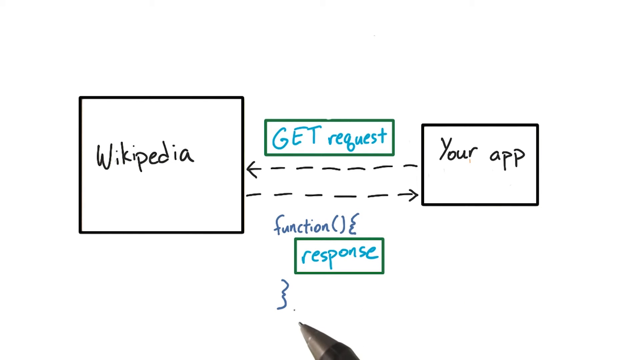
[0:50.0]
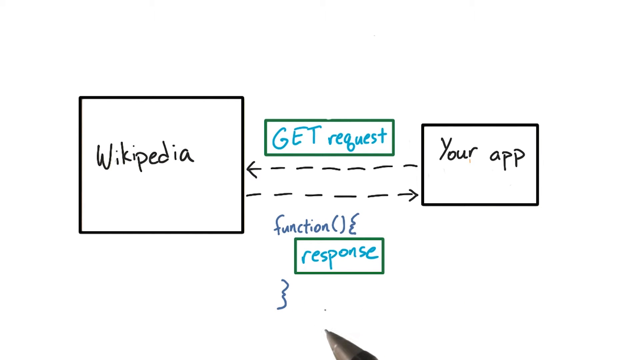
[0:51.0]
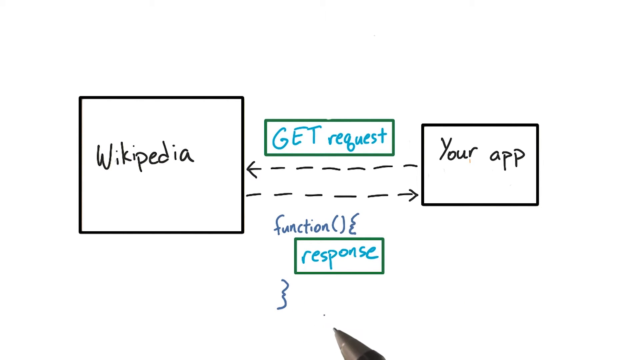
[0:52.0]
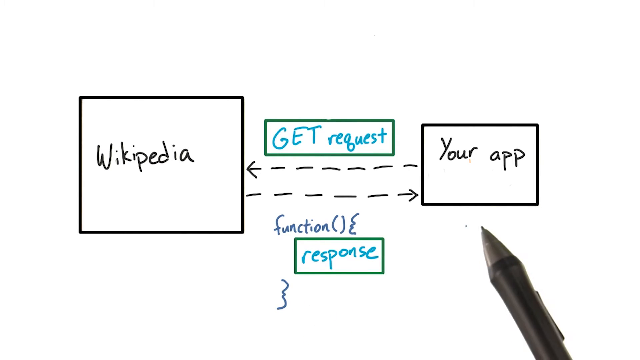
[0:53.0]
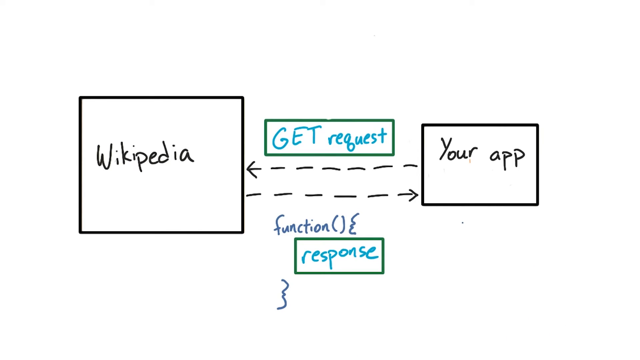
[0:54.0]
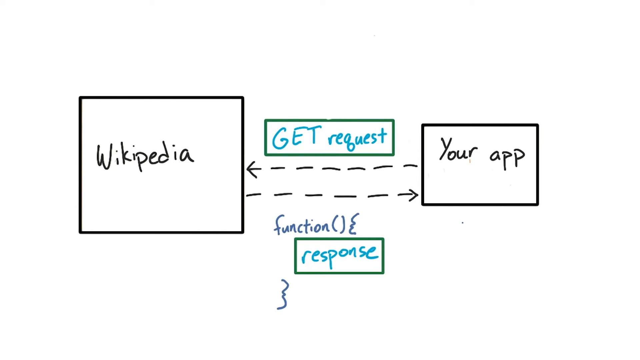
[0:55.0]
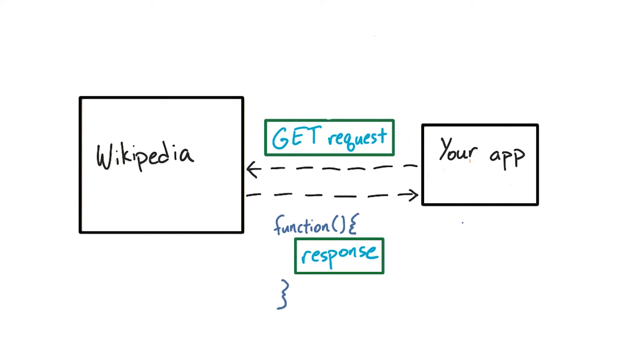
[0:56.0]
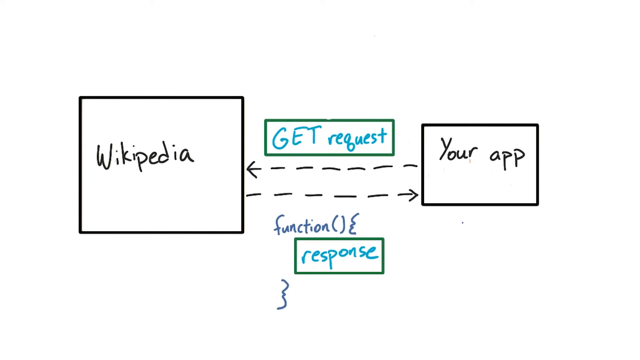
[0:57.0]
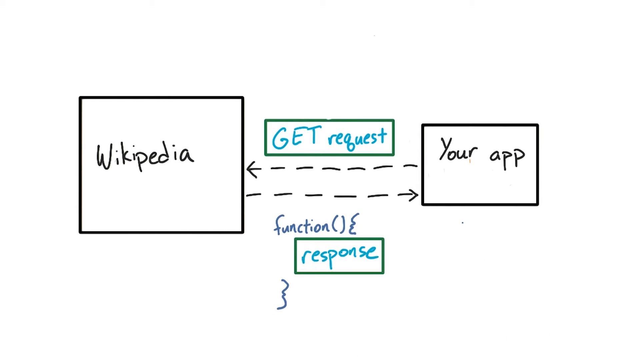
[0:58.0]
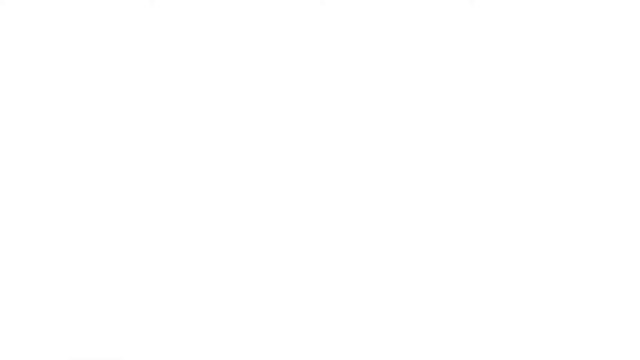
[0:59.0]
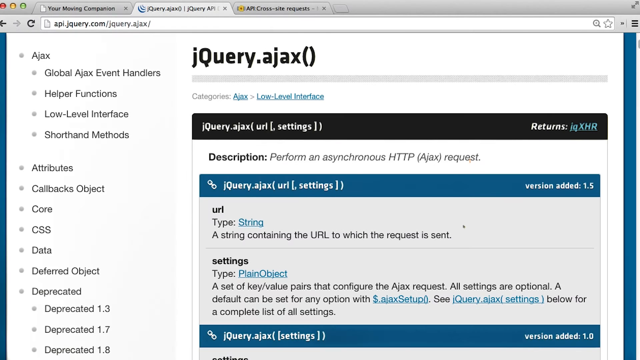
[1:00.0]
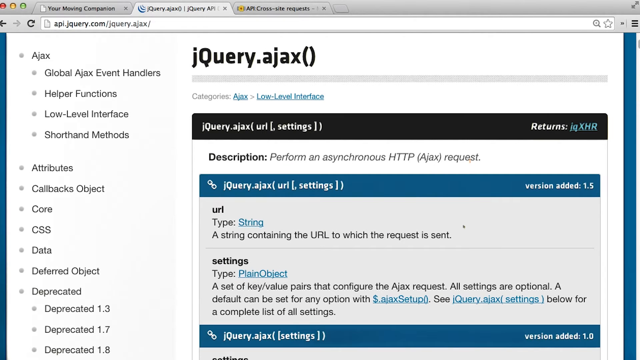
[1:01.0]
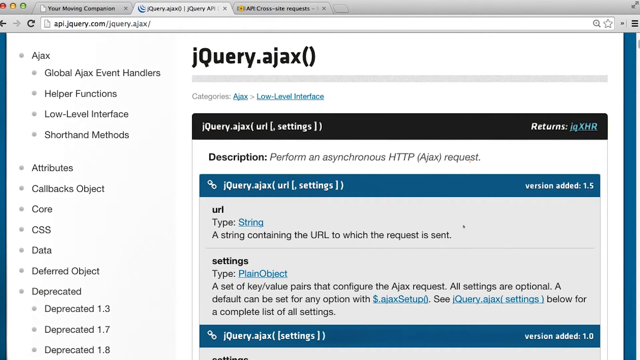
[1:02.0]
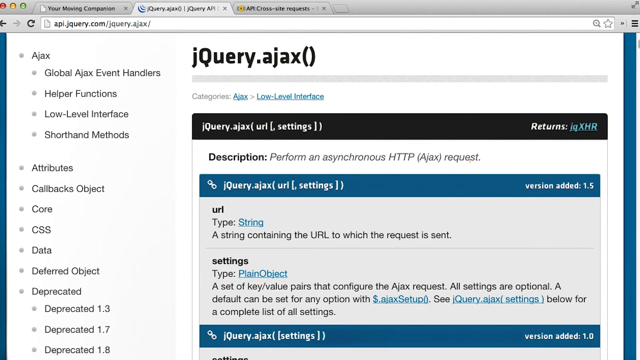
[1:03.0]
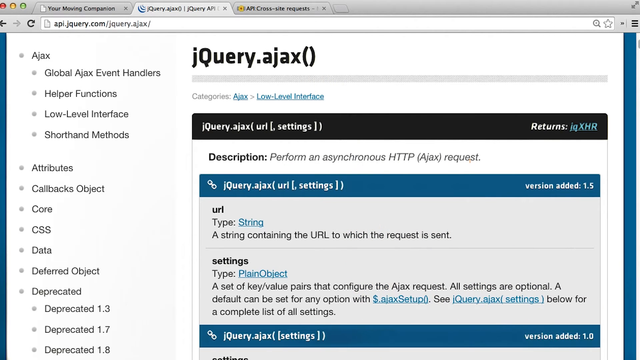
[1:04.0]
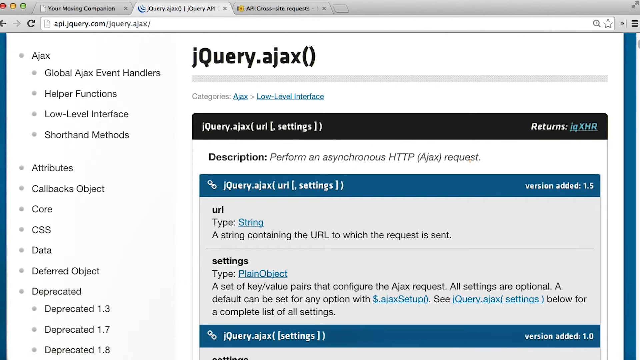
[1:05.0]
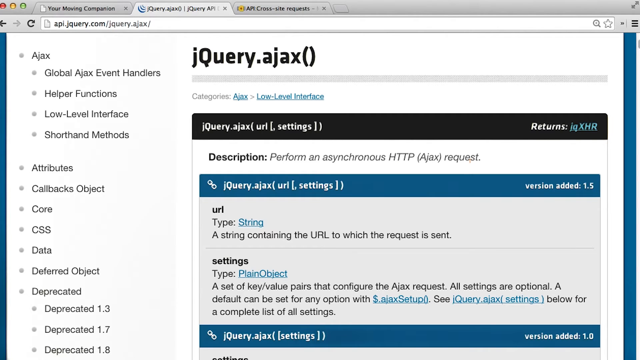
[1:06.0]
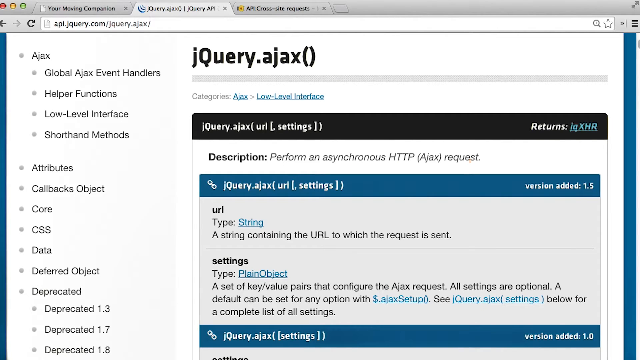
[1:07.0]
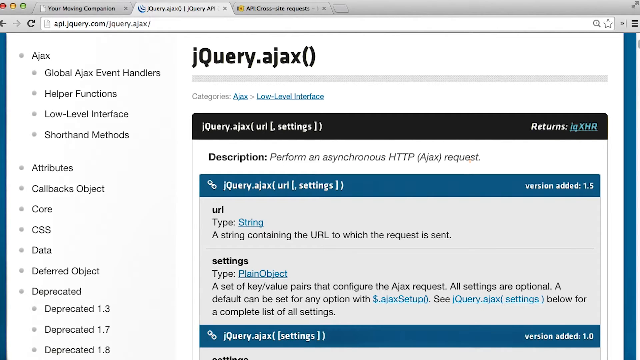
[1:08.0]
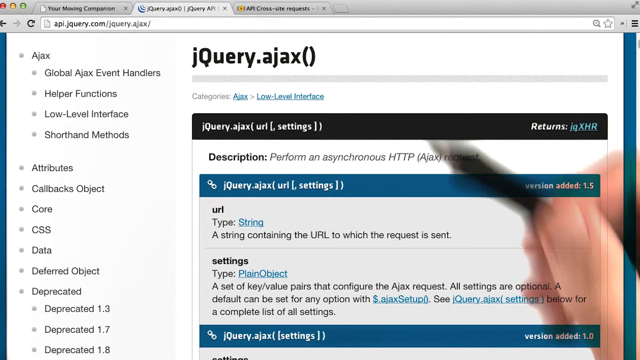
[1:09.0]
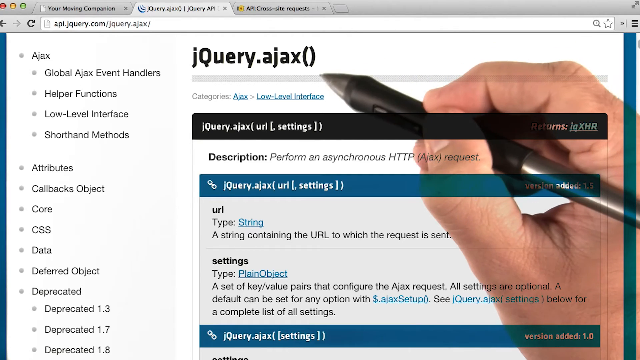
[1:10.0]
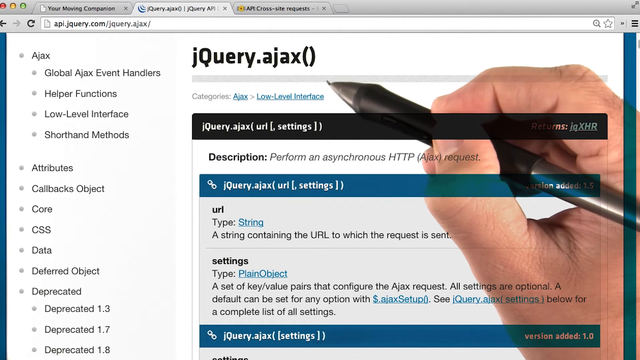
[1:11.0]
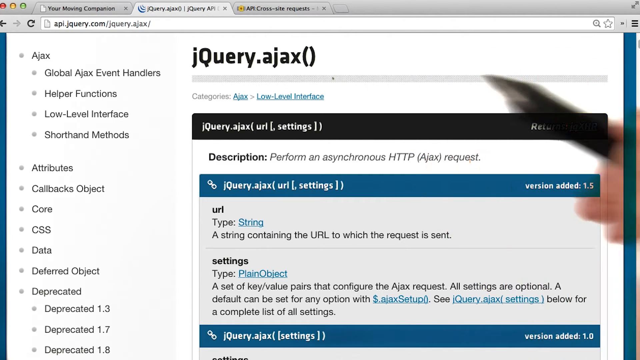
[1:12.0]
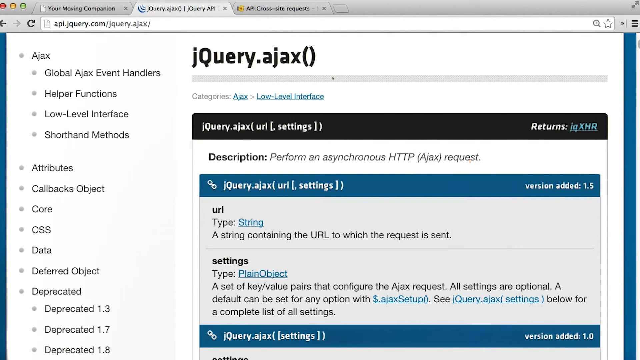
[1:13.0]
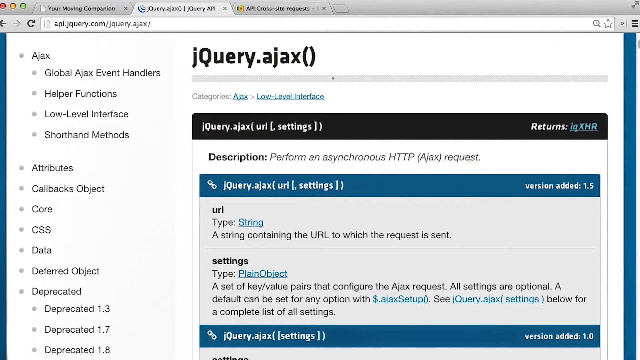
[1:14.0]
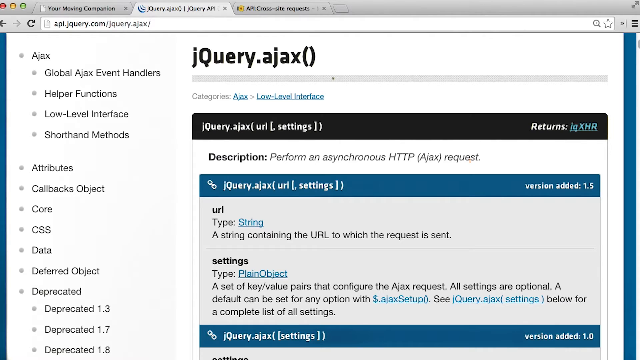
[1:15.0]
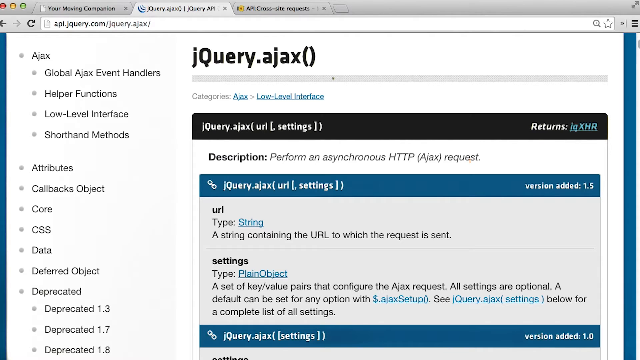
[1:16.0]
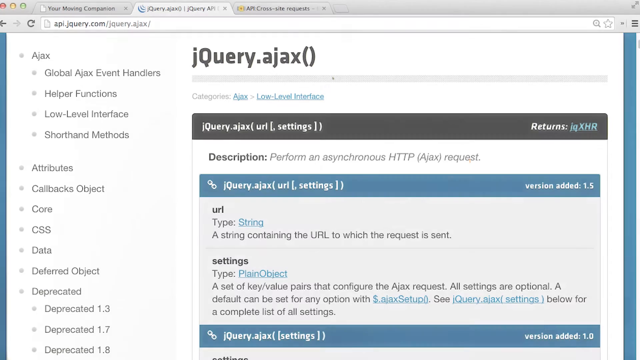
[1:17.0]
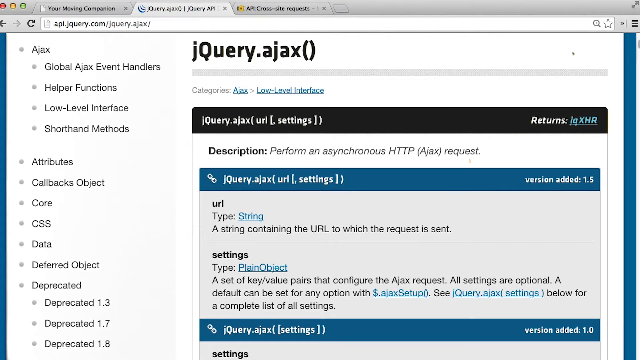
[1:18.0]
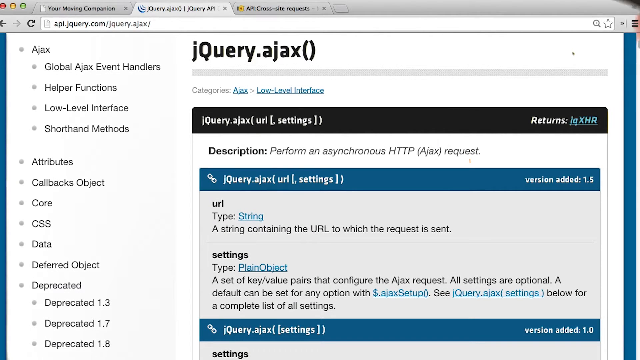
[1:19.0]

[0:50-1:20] A diagram reads "Wikipedia," "get request" and "your app," with dotted lines running between them. Another page reads "jquery.ajax." A person's right hand moves on the screen, making random dots wherever it touches down; the dots apparently disappear, and the hand comes in again to make another dot in another place. The view goes back to the hand-drawn map, which reads "get request" and "response" underneath "Wikipedia," with two dotted-line arrows between them. The person comes in with the pencil and makes a dot near the word "response." The view returns to the jquery.ajax page, where the person keeps making random dots in empty places on the page.